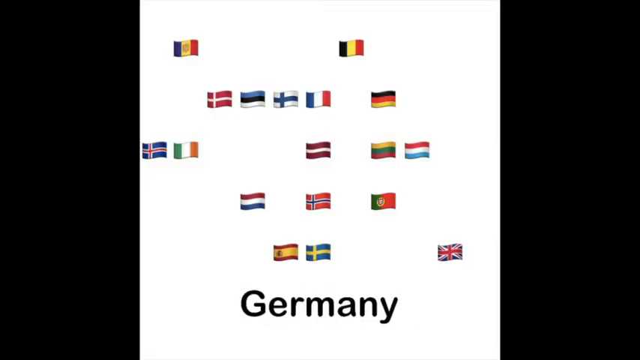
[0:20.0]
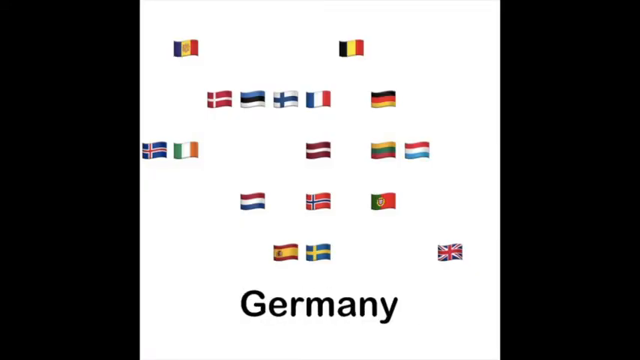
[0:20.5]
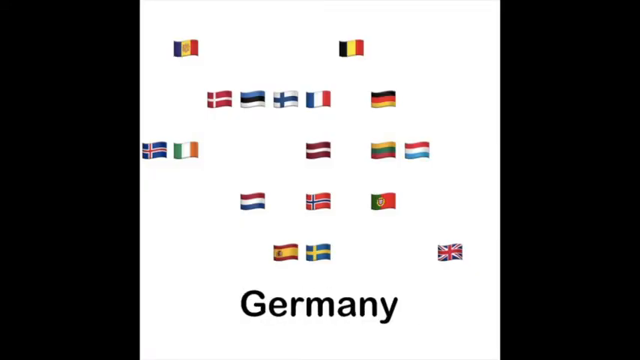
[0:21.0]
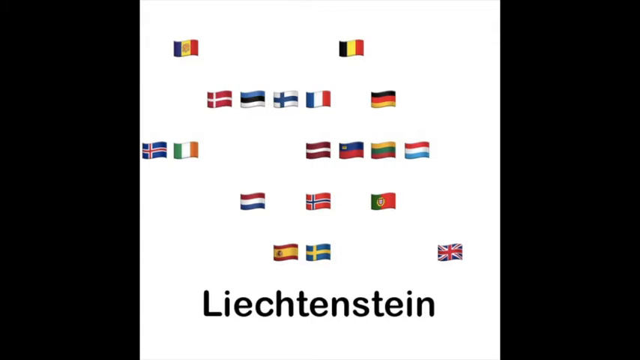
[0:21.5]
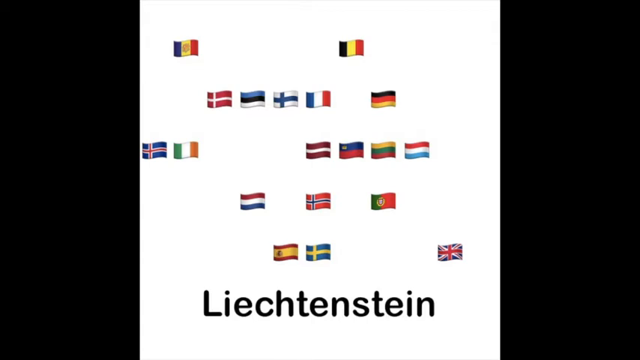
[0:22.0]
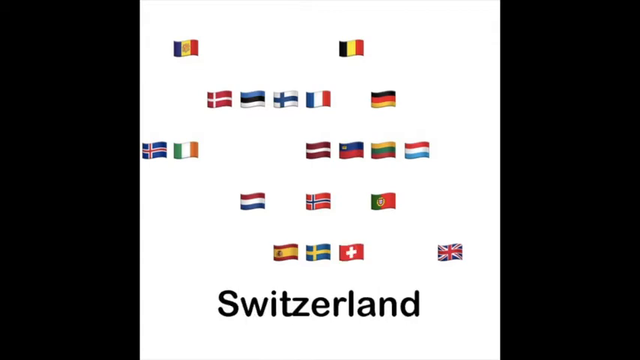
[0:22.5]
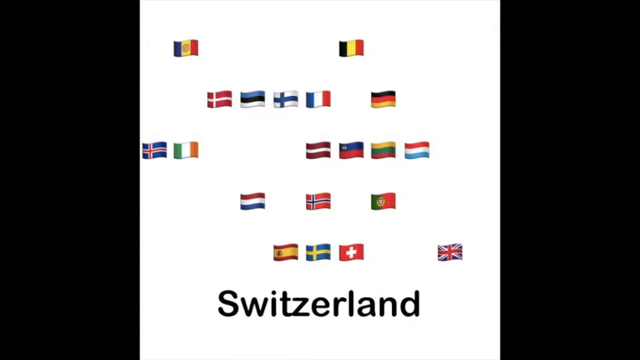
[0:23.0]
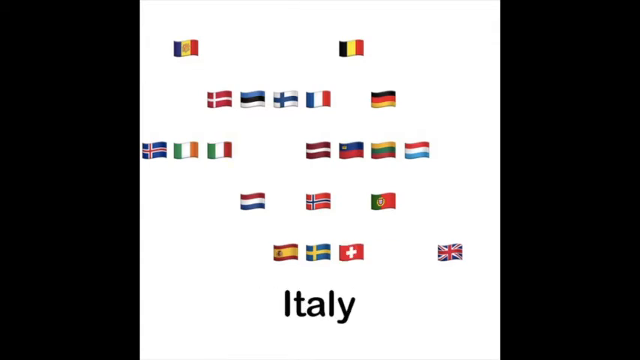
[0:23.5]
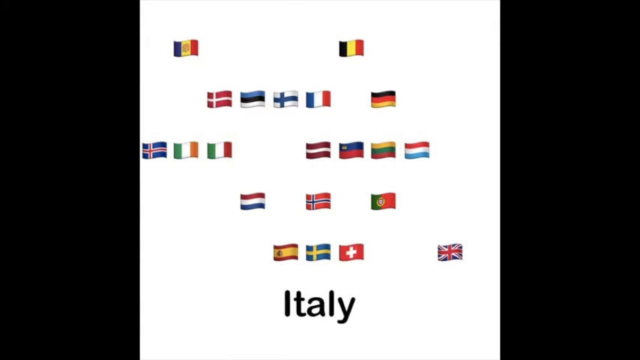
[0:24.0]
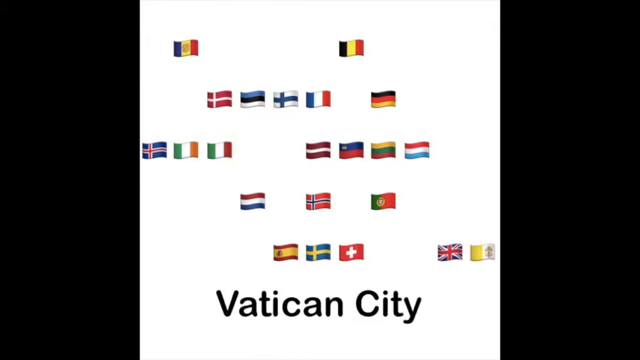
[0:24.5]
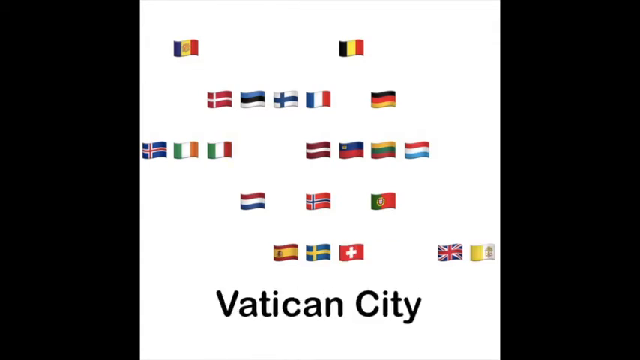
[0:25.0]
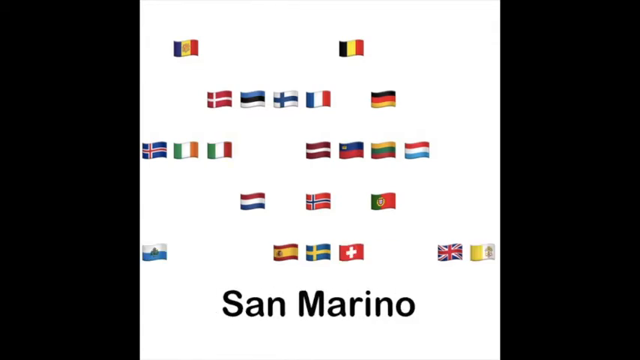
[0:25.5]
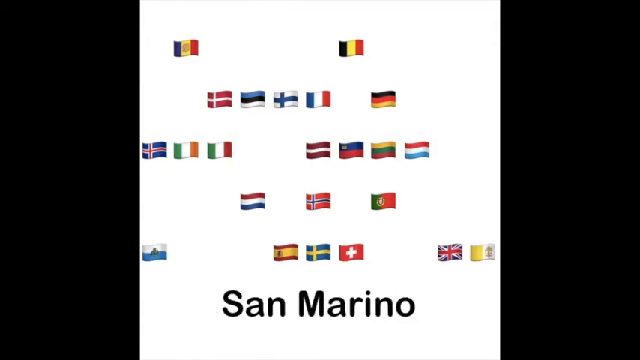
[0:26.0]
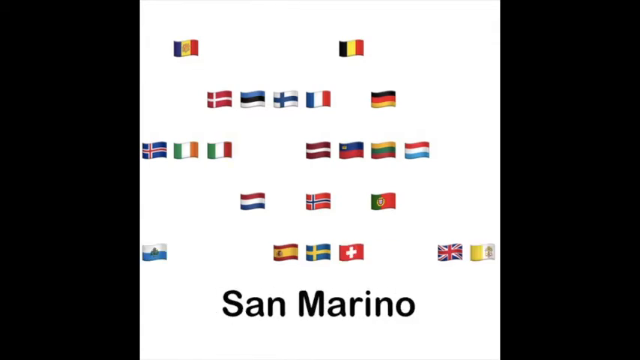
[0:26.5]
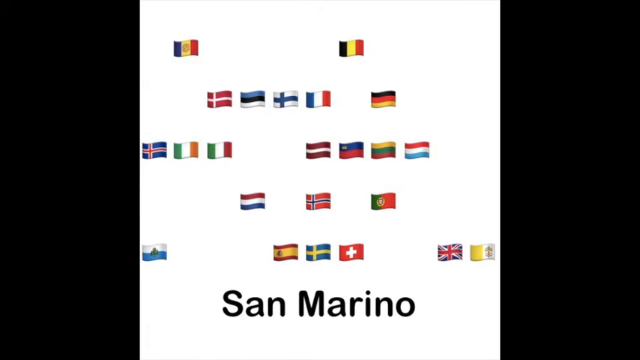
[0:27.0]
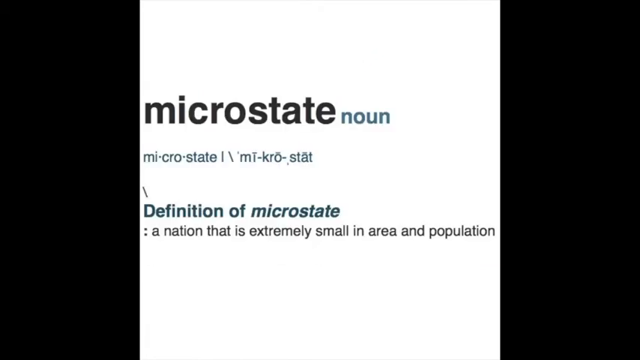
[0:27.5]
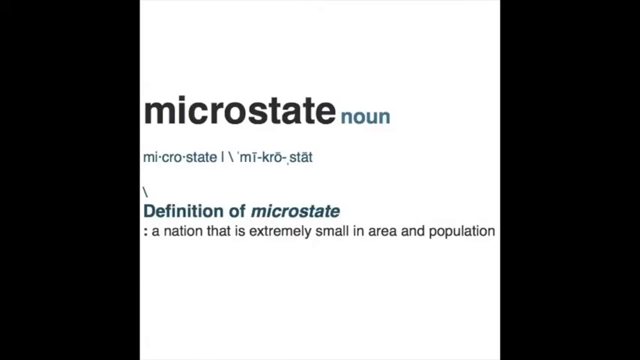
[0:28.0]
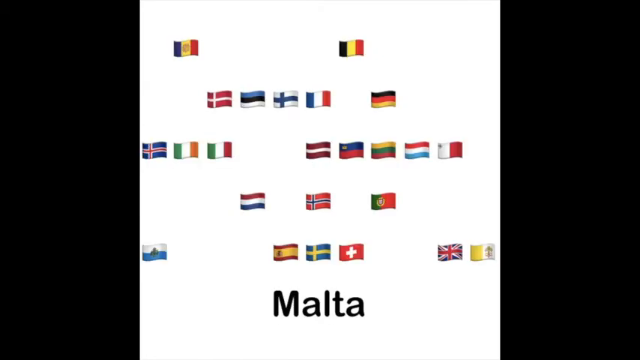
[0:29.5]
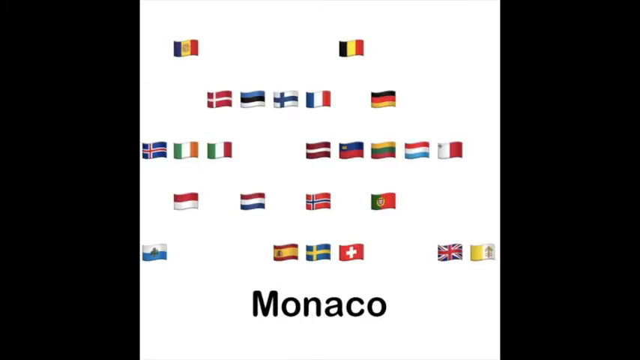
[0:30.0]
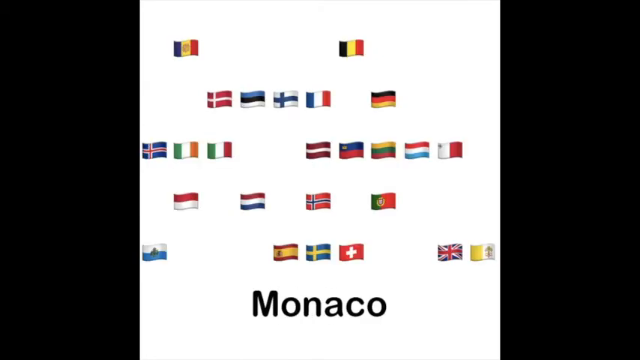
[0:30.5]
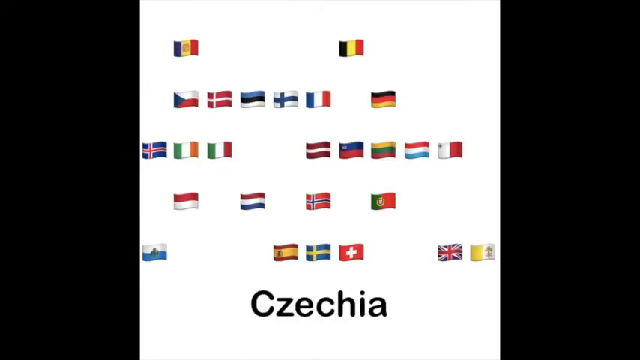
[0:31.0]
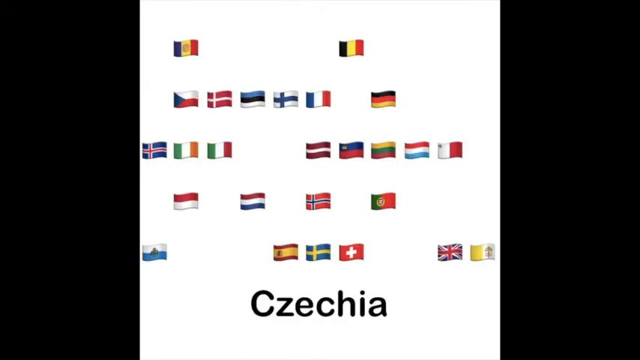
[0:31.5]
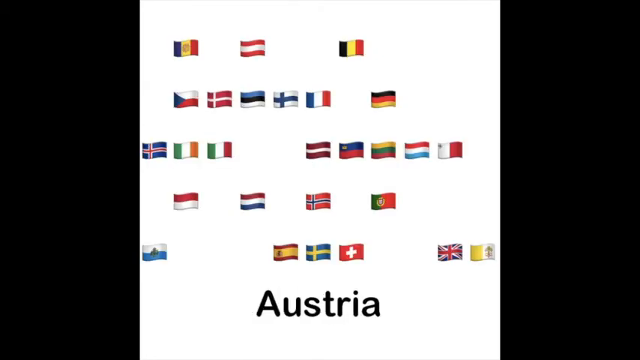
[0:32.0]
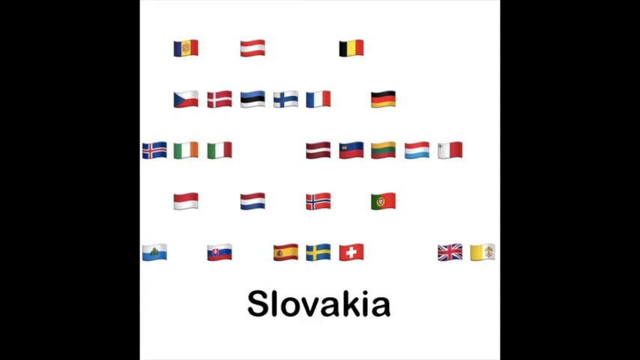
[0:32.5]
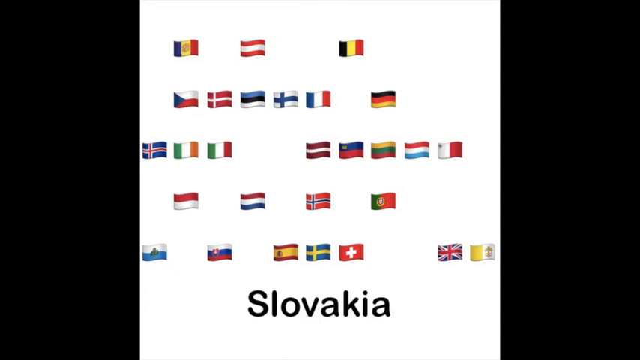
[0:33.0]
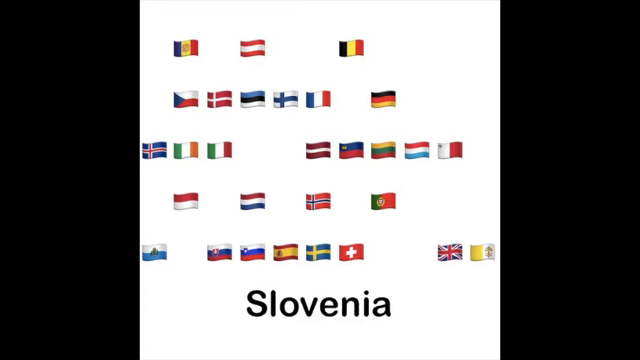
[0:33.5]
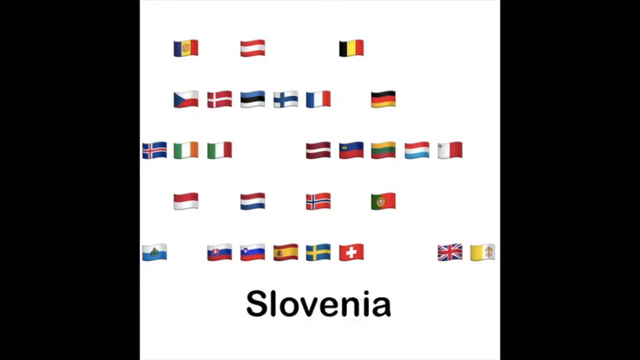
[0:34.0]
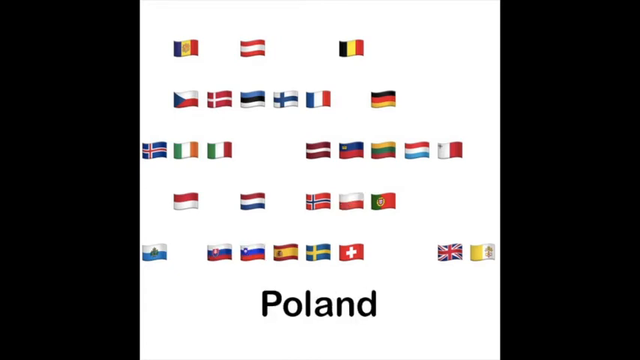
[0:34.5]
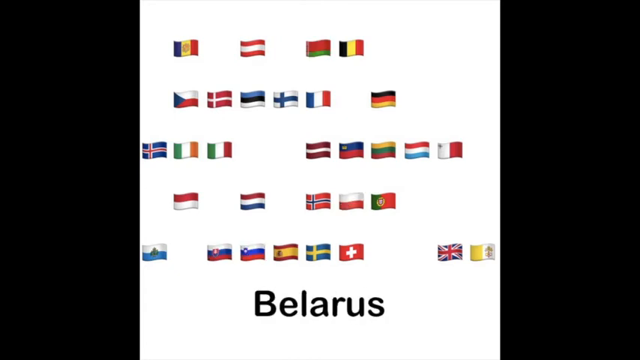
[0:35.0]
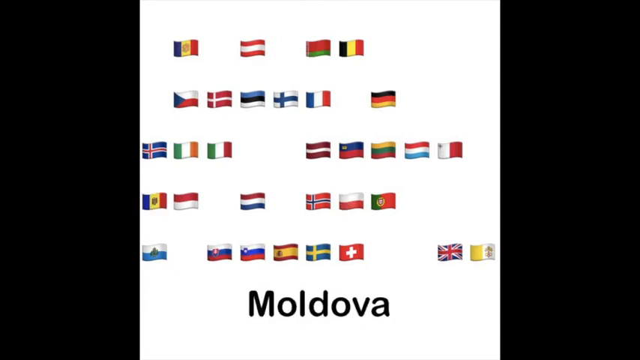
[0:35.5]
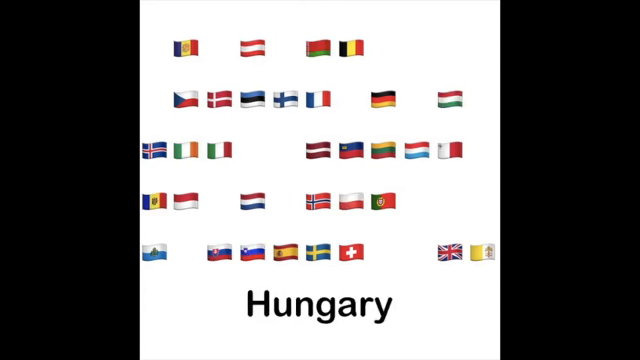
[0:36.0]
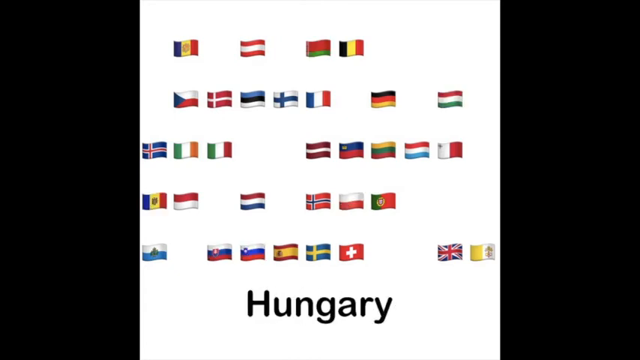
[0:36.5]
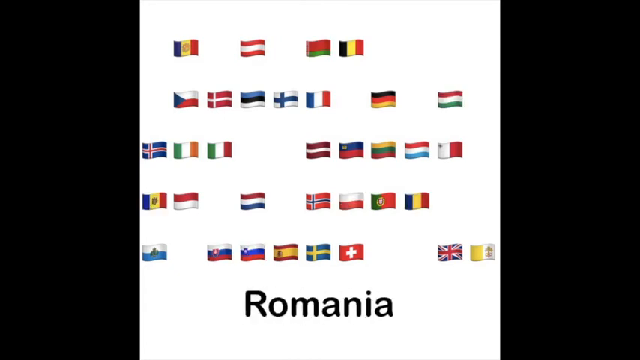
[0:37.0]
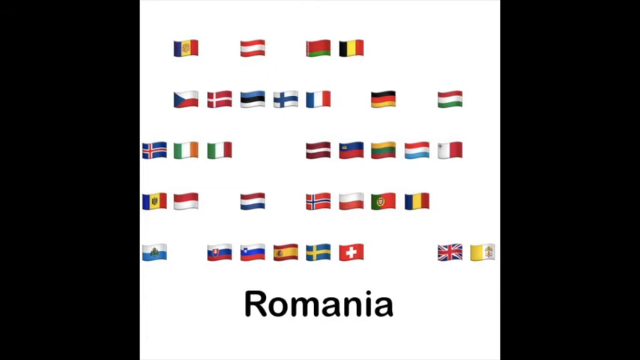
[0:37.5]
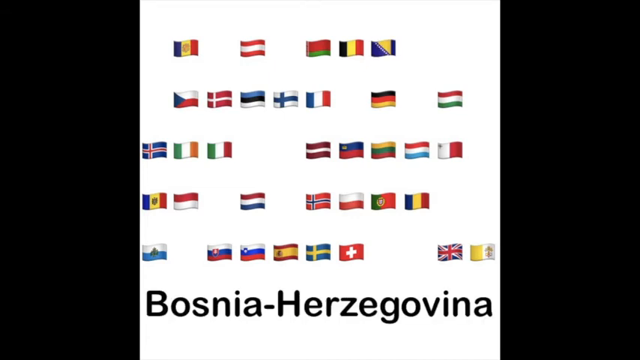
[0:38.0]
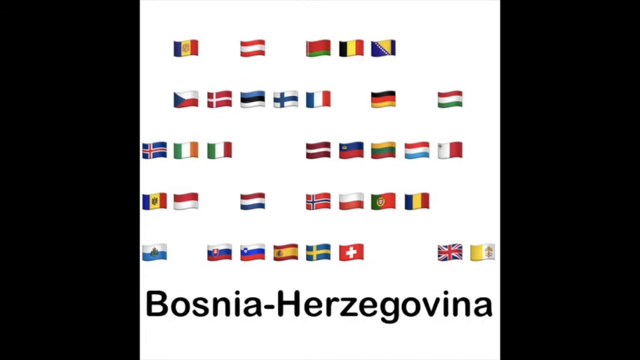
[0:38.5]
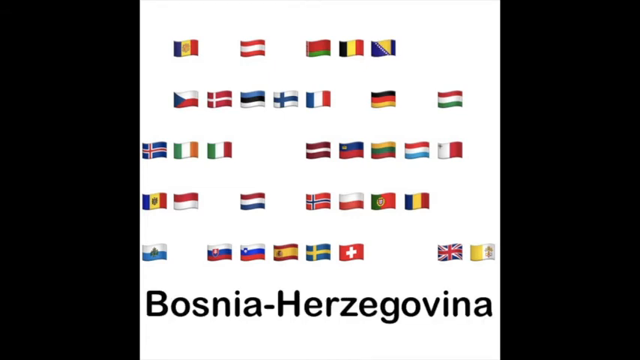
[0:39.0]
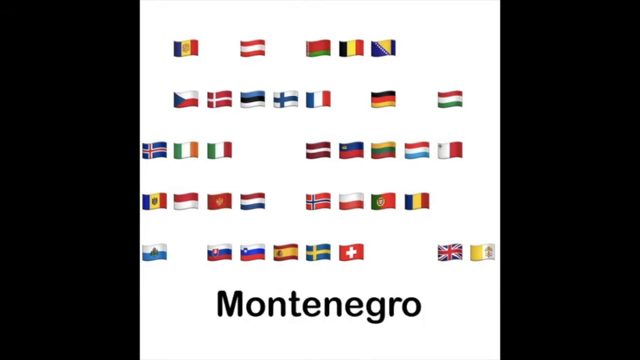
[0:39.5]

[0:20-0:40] Many national flags are on the screen. More flags are added: Lichtenstein, followed by Switzerland, Italy, Vatican City, and San Marino. The screen then switches to one that says "micro state" and "Noun" in the middle, with instructions on how to pronounce it below. Below that is the definition: "a nation that is extremely small in area and population." The video then switches back to the flag screen and adds Malta, then Monaco, Czechia, Austria, Slovakia, Slovenia, Poland, Belarus, Moldova, Hungary, Romania, Bosnia Herzegovina, and Montenegro. The unique, colorful flags are added all over the screen, and each time a flag is added, the country's name appears at the bottom.